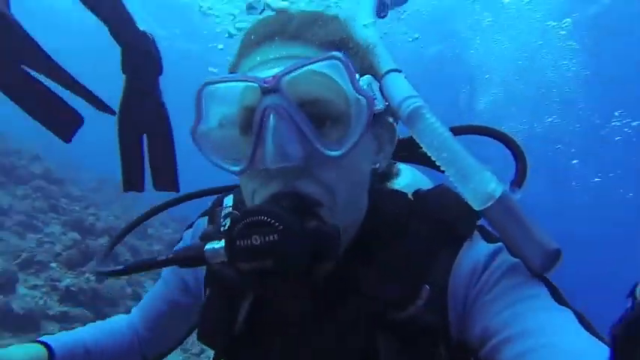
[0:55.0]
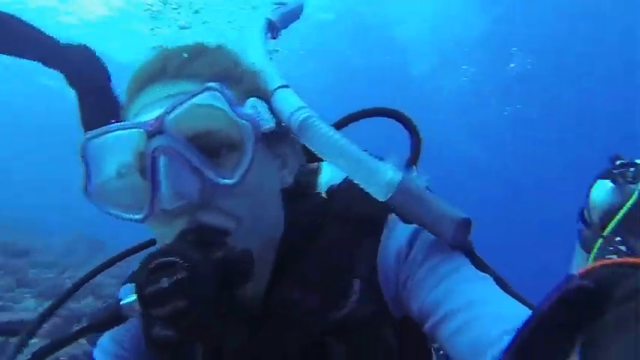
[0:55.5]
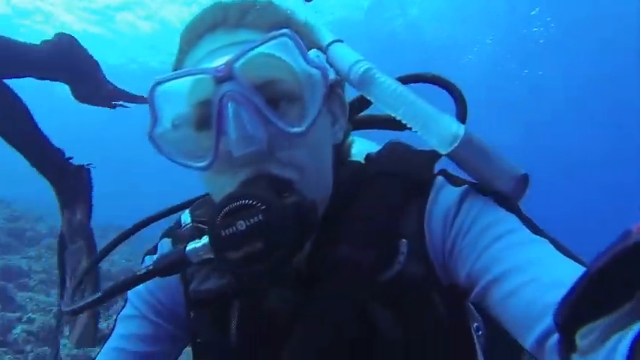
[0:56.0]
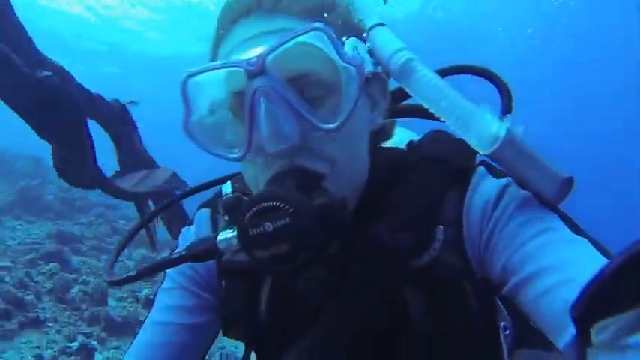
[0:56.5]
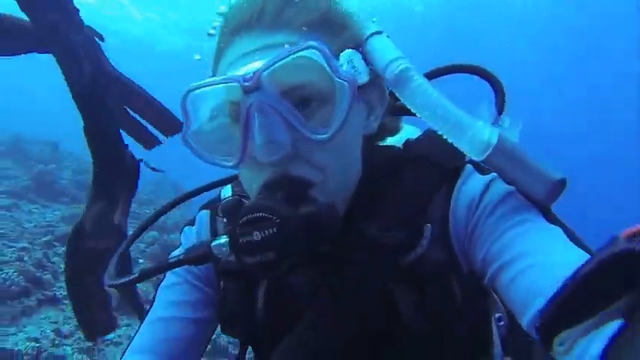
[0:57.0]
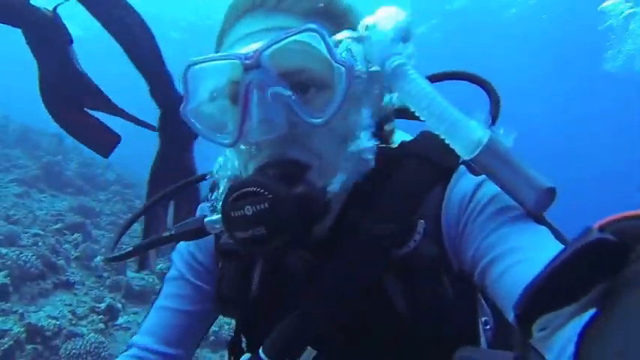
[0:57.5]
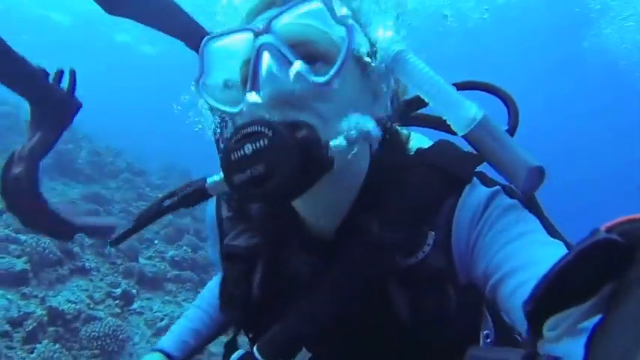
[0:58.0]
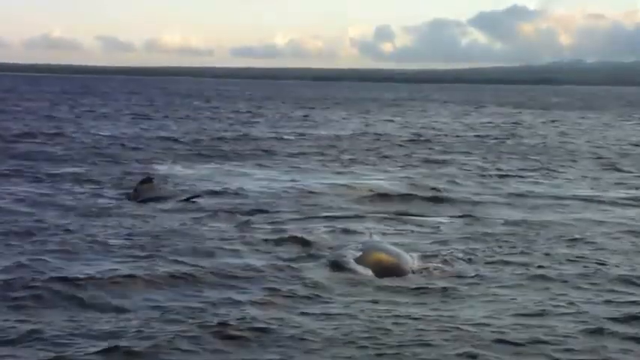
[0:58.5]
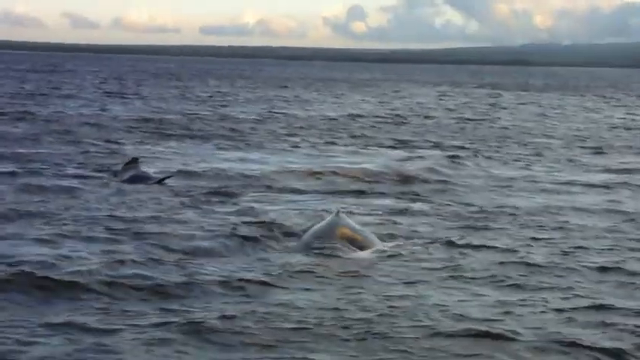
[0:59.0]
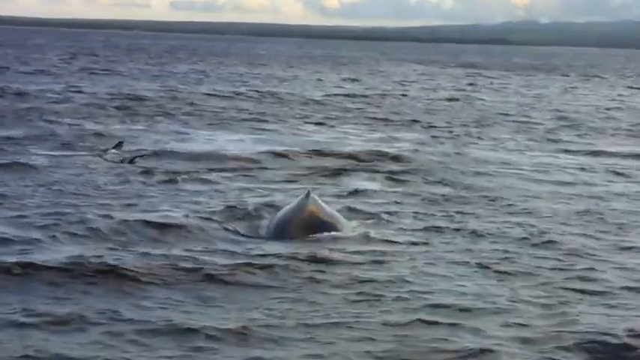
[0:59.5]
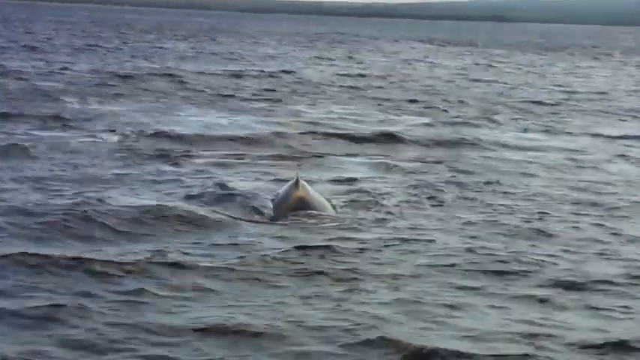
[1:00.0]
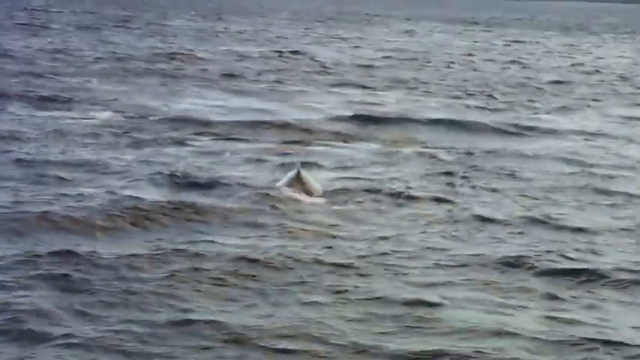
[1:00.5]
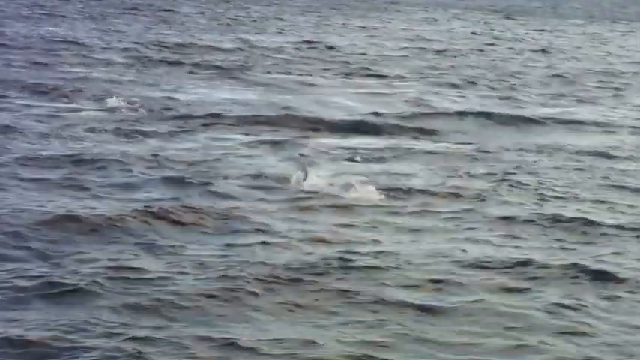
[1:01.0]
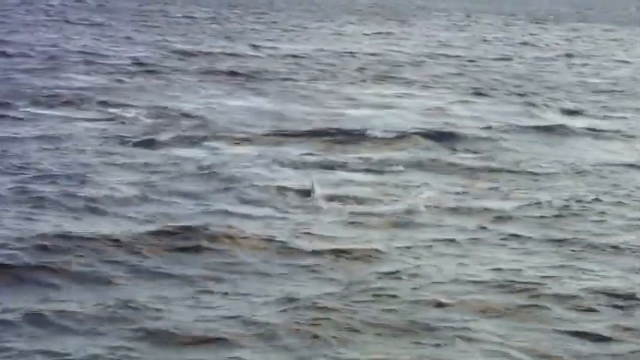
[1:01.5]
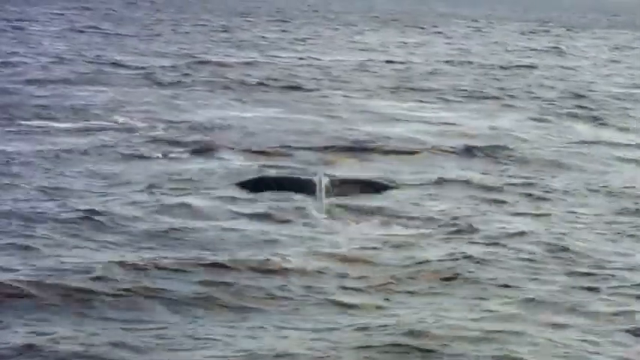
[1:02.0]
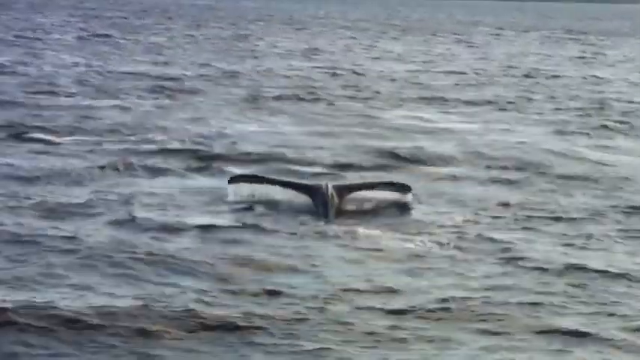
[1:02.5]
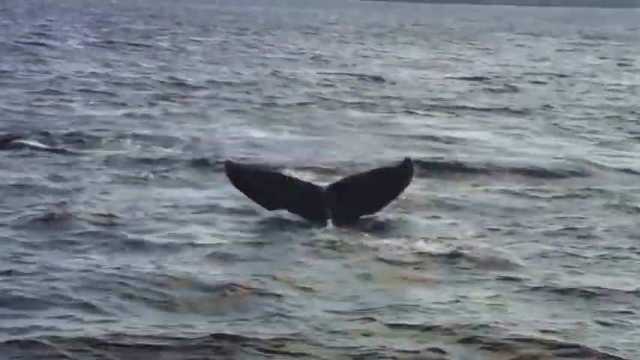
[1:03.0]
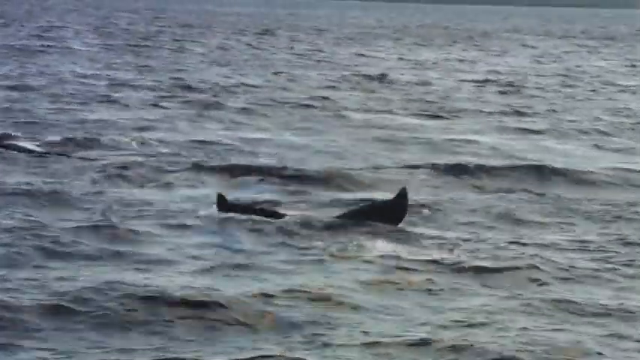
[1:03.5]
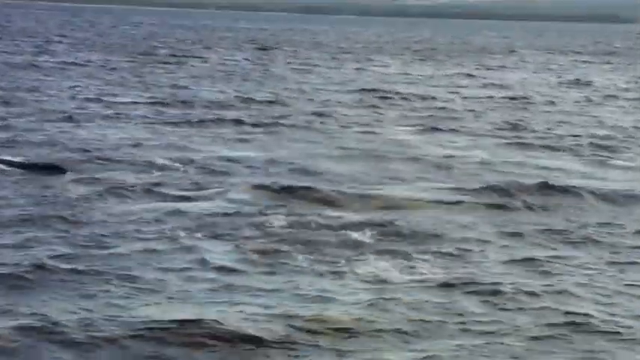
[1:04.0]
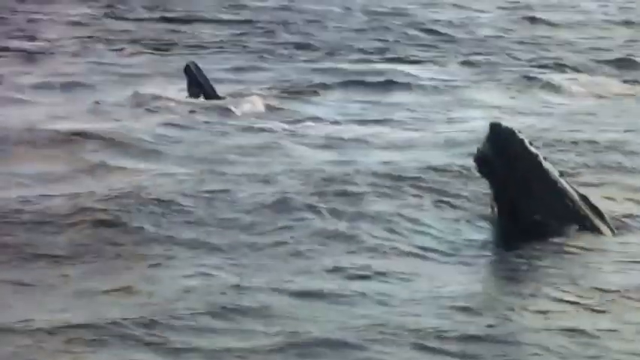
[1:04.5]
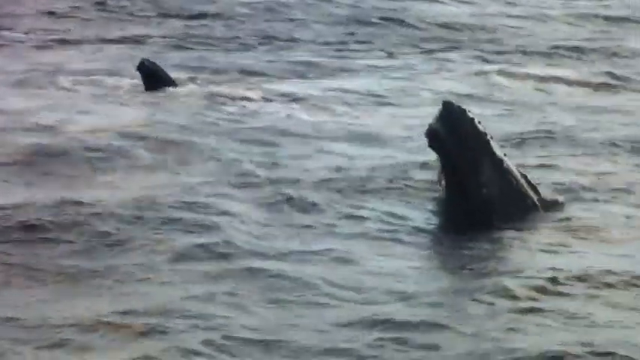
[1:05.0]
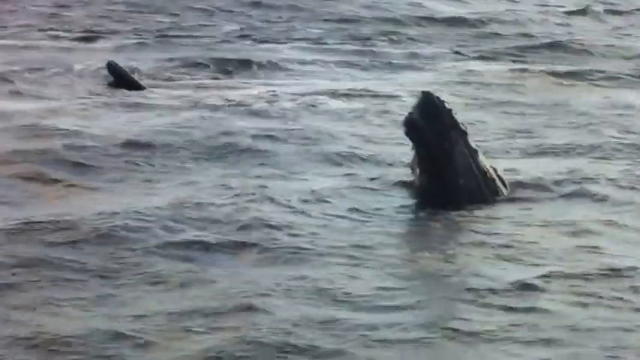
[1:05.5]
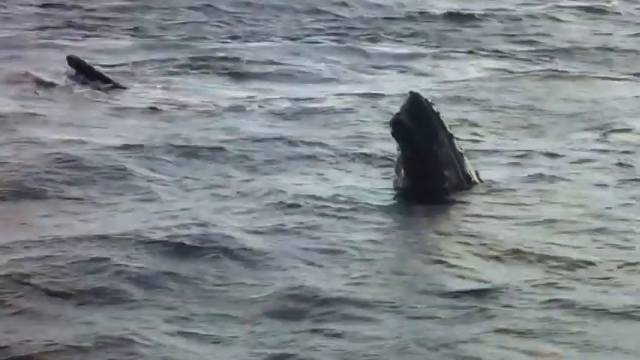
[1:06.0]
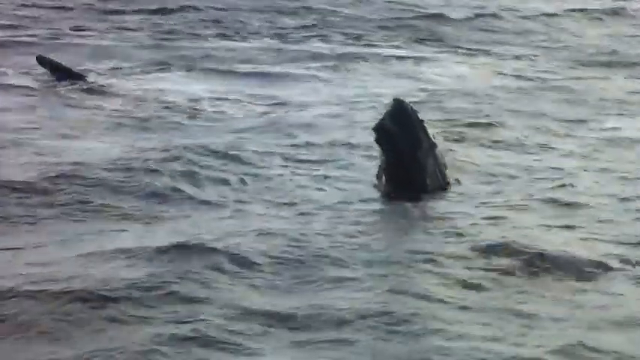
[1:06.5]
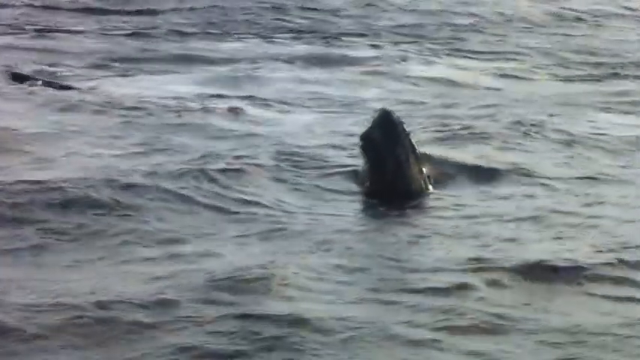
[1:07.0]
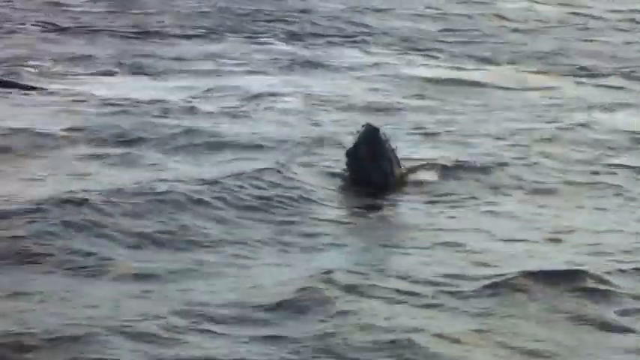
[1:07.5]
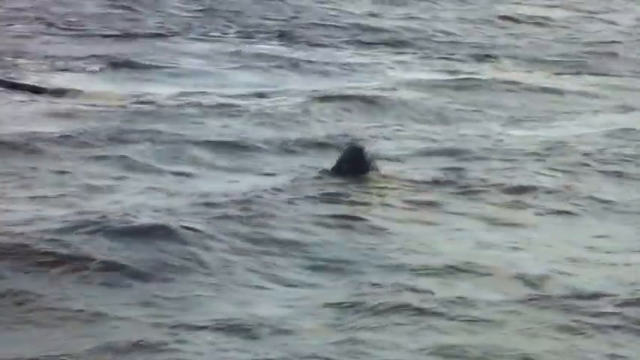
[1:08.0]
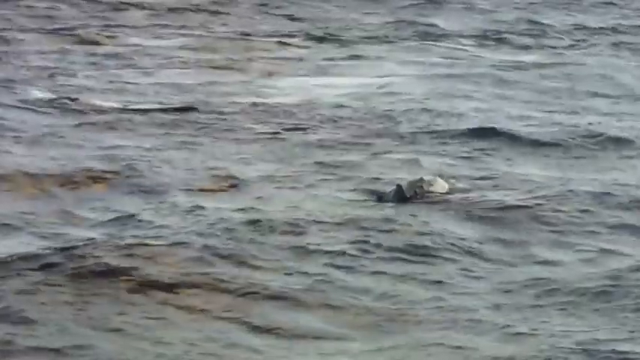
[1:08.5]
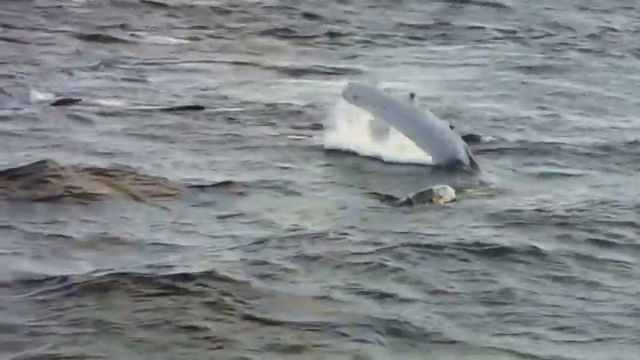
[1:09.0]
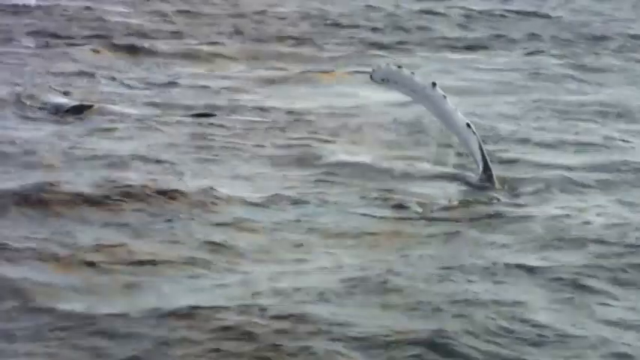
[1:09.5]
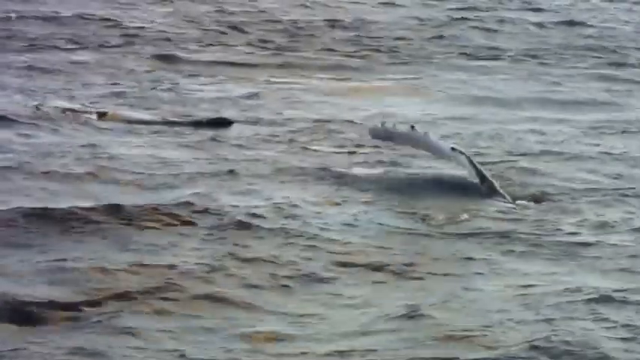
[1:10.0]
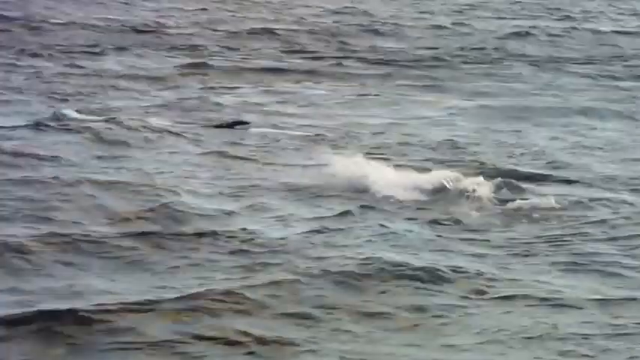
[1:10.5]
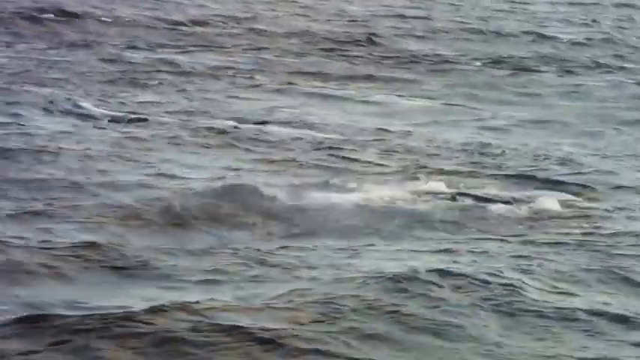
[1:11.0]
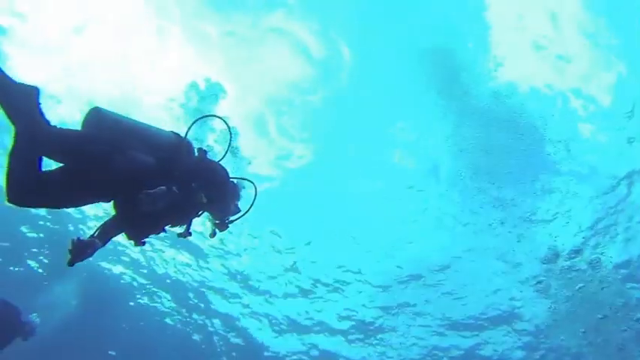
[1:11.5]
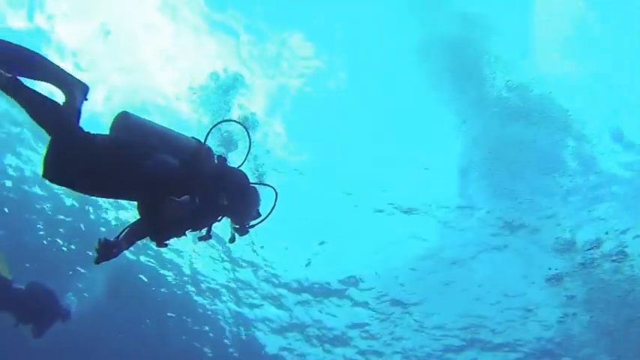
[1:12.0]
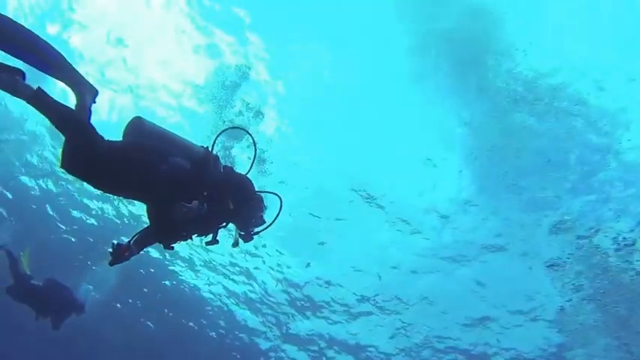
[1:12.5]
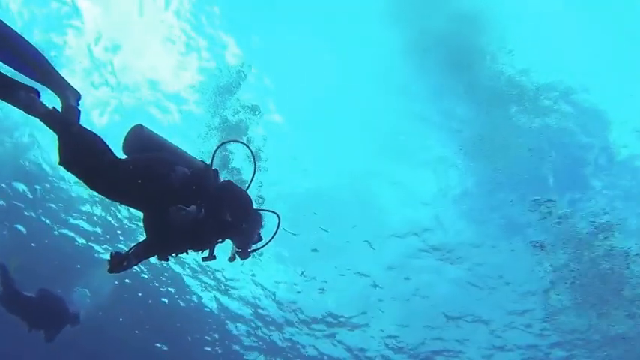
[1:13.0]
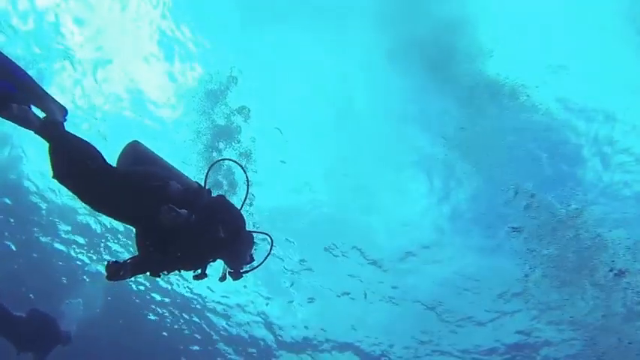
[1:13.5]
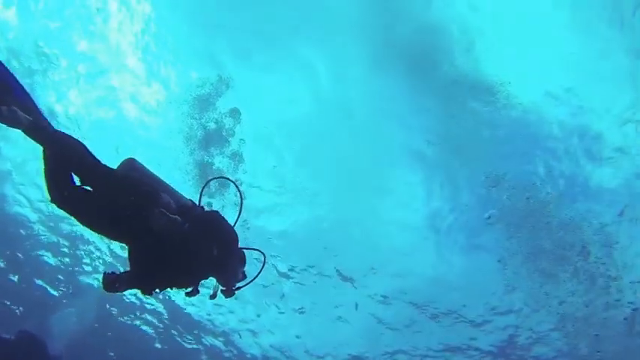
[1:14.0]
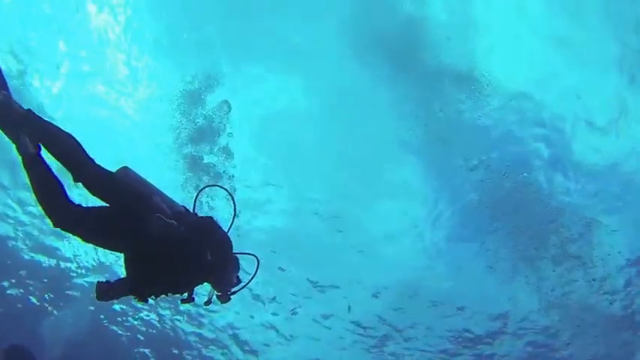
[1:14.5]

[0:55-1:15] One of the scuba divers is underwater. He has brown hair and a white complexion, with a black mouth guard to breathe through and translucent tubing off to the right of his skull. He has white sleeves, black scuba gear, and goggles with what looks like a purple outline around them. White caption lettering reads "GoPro Hawaii scuba diving", and to its left is a drawn image of what looks to be a man's face with a beard. The black fins of the other scuba diver are beside them, floating in the water. The water in the background is blue, and the ground beneath them is jagged brown rocks. The next scene is above water, with gray sky and gray water. Animals, possibly dolphins or whales, surface and go back down; from their tails they look like whales. Their front faces pop up out of the water, raising a white fin. The following scene shows one of the divers underwater, with crystal blue water above him, a white tank, and a yellow tube line going from his mouth to his tank.